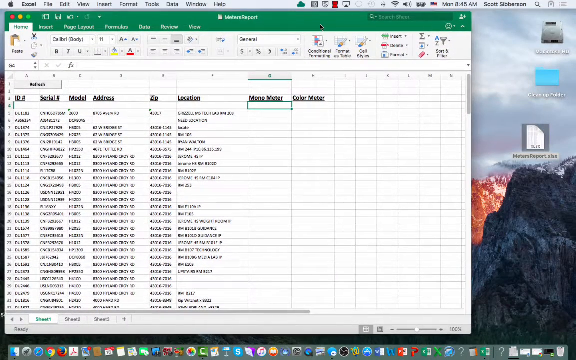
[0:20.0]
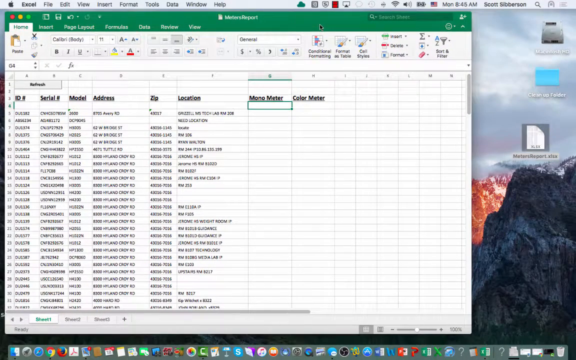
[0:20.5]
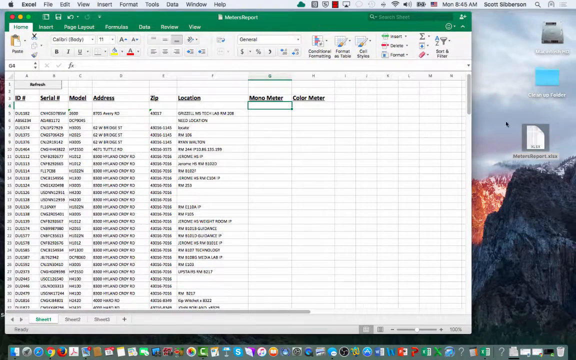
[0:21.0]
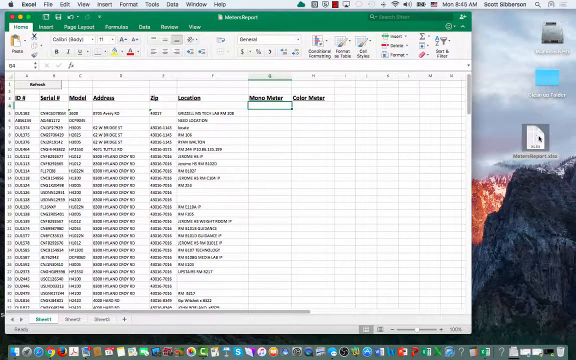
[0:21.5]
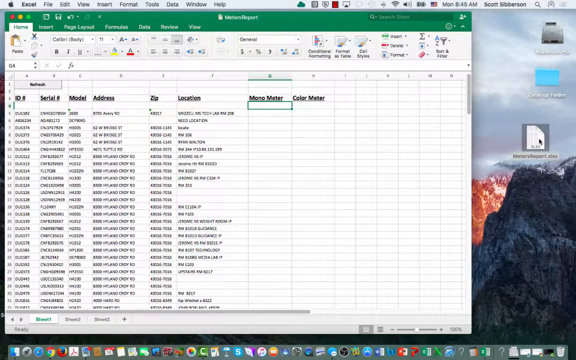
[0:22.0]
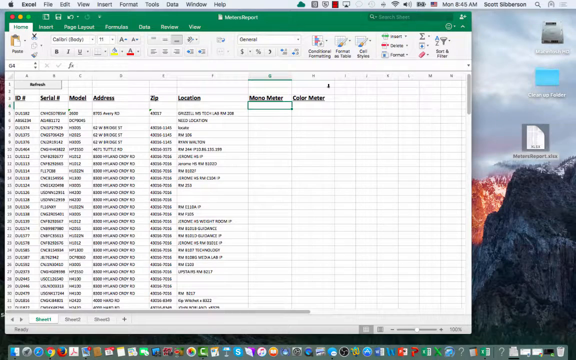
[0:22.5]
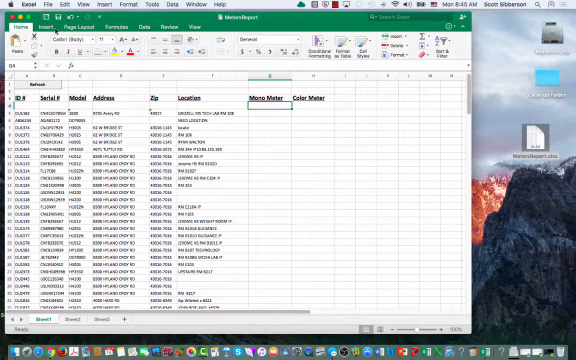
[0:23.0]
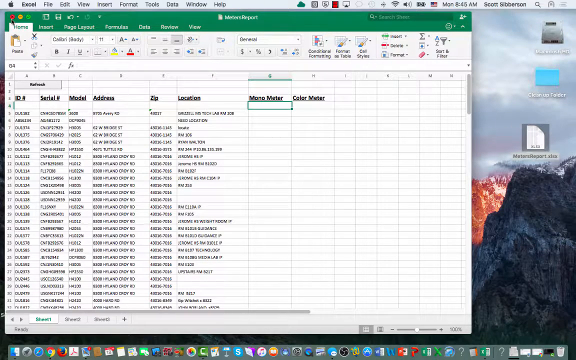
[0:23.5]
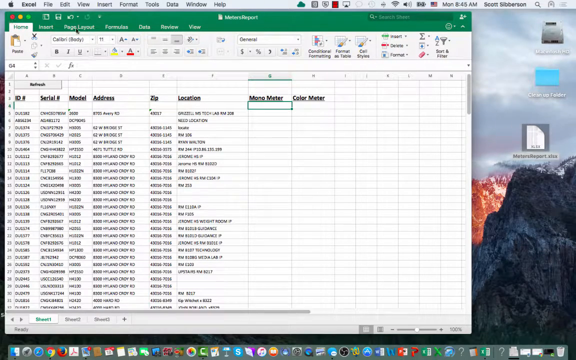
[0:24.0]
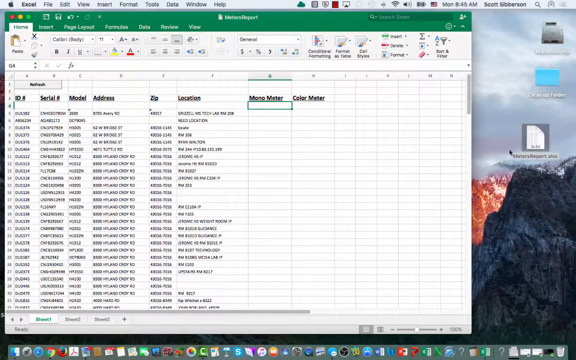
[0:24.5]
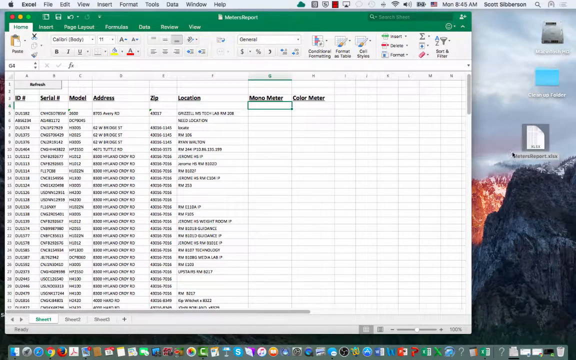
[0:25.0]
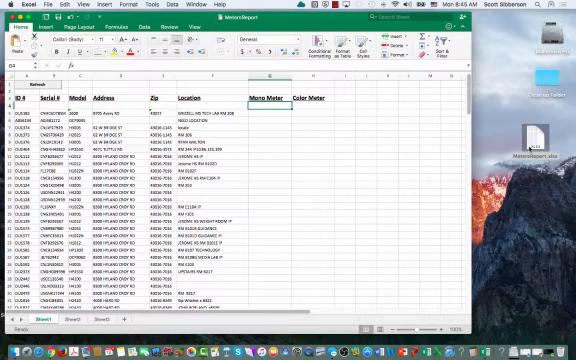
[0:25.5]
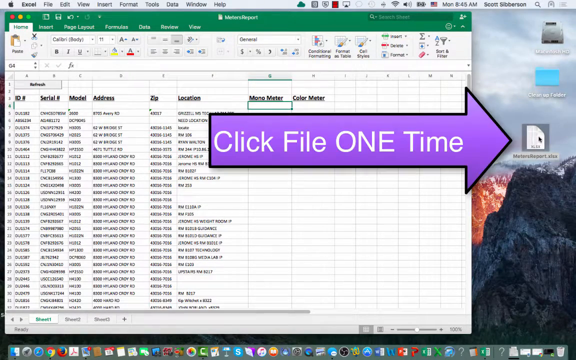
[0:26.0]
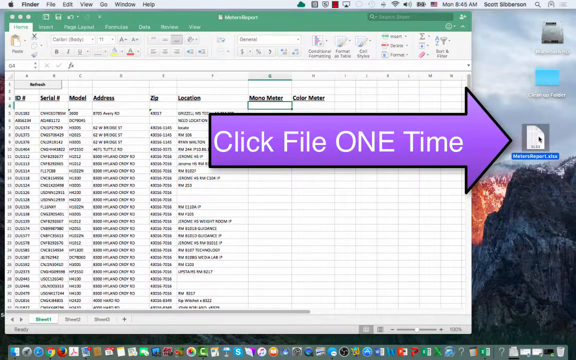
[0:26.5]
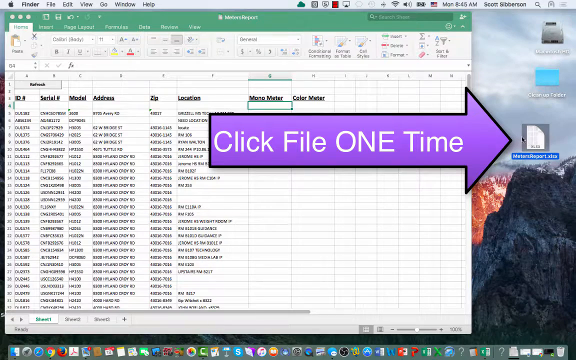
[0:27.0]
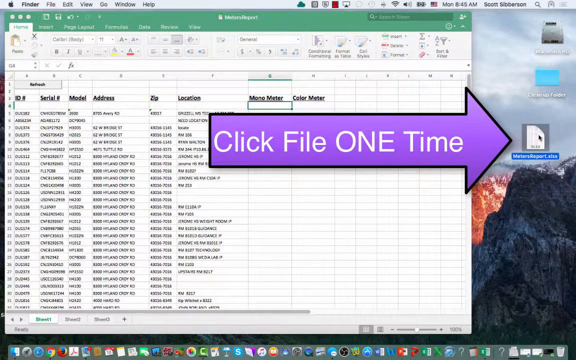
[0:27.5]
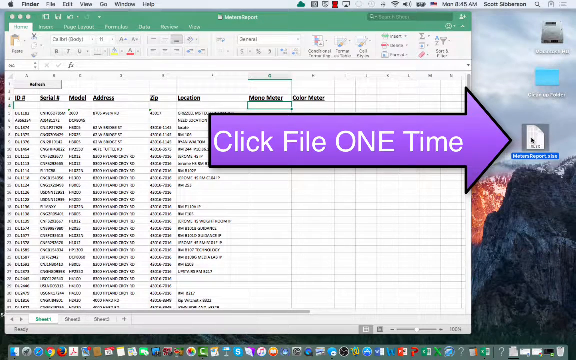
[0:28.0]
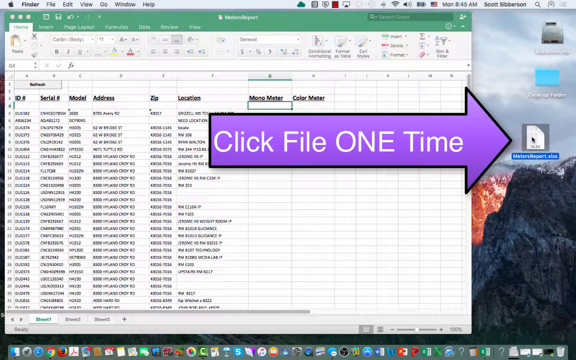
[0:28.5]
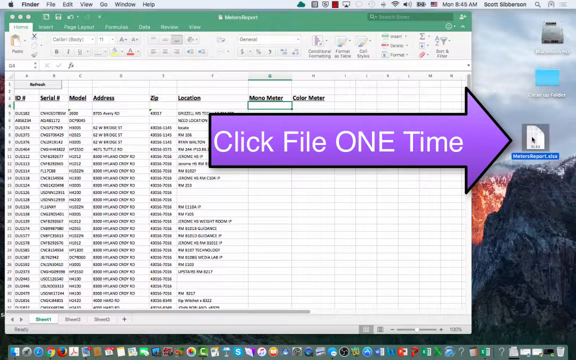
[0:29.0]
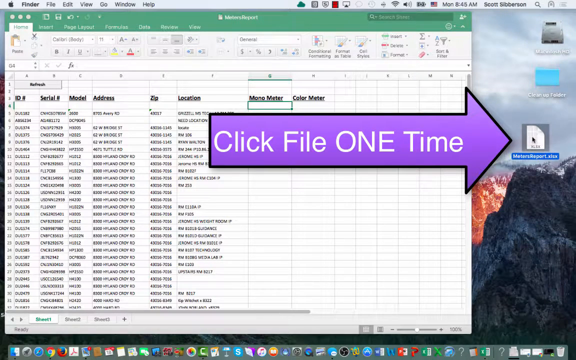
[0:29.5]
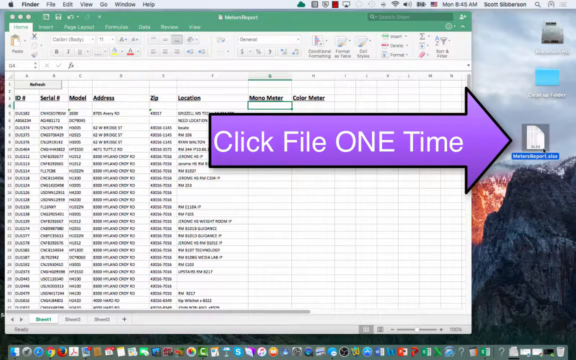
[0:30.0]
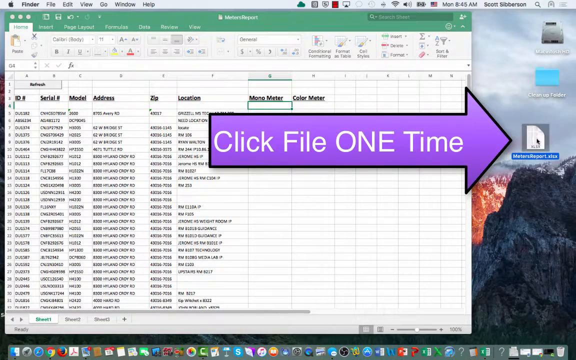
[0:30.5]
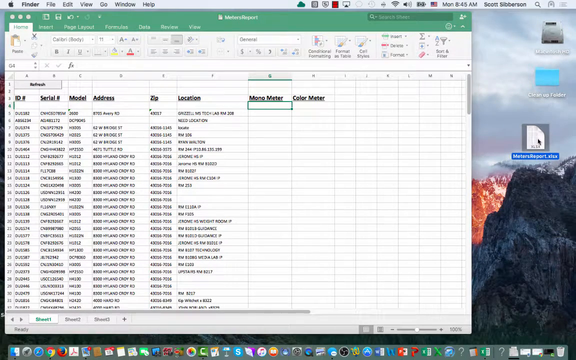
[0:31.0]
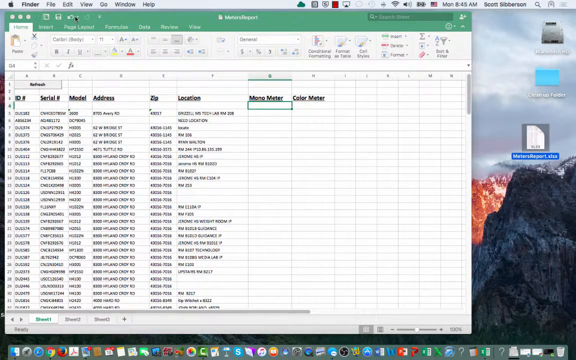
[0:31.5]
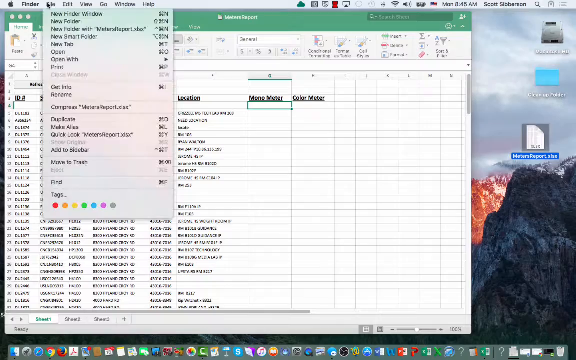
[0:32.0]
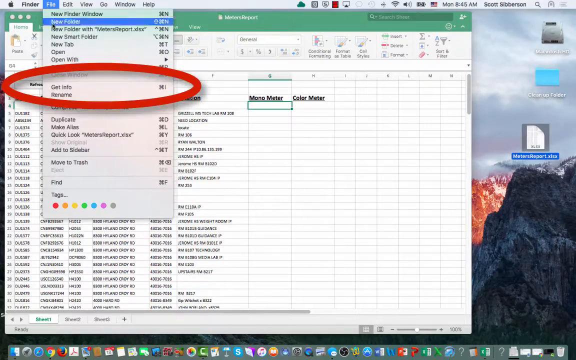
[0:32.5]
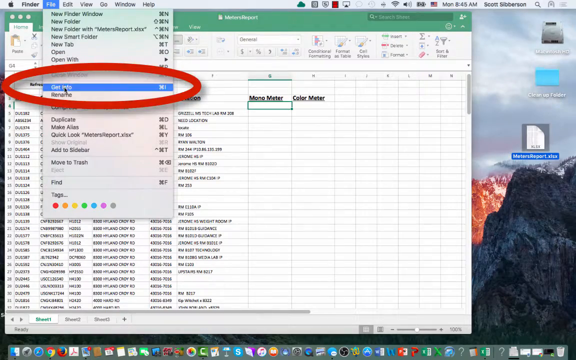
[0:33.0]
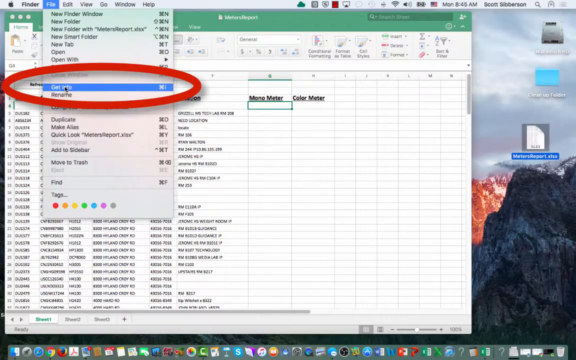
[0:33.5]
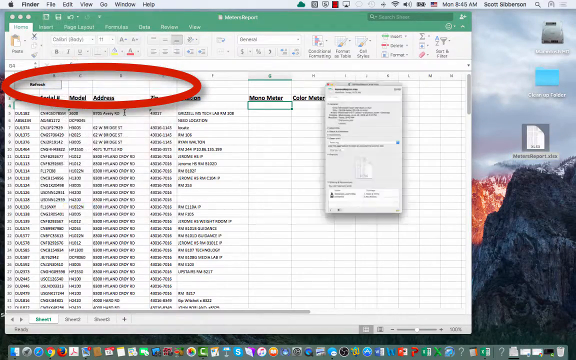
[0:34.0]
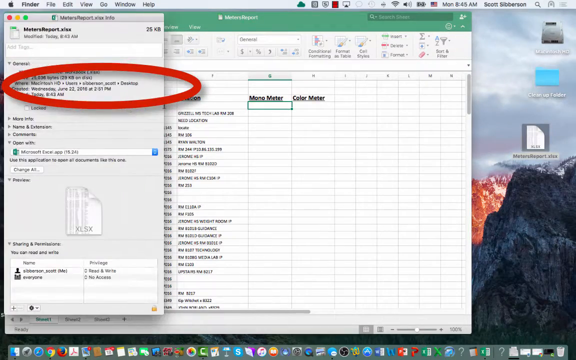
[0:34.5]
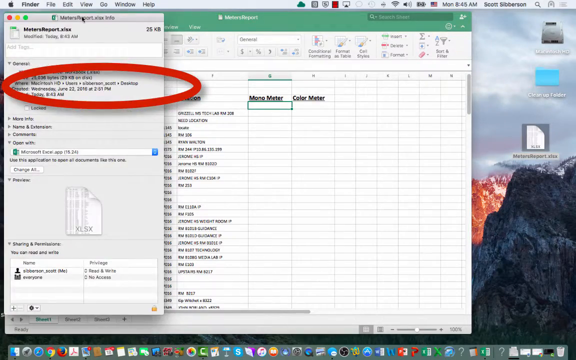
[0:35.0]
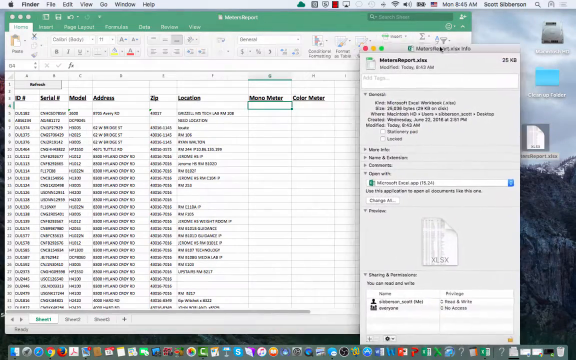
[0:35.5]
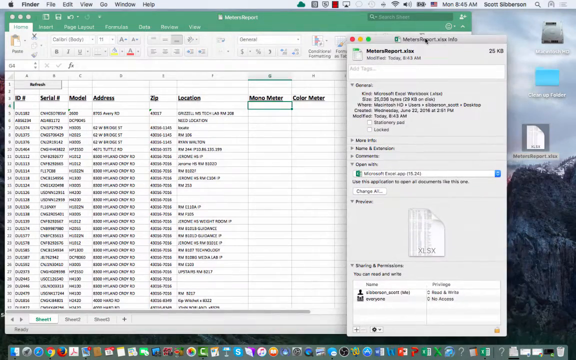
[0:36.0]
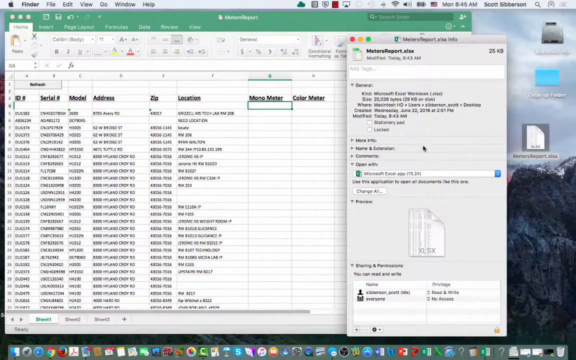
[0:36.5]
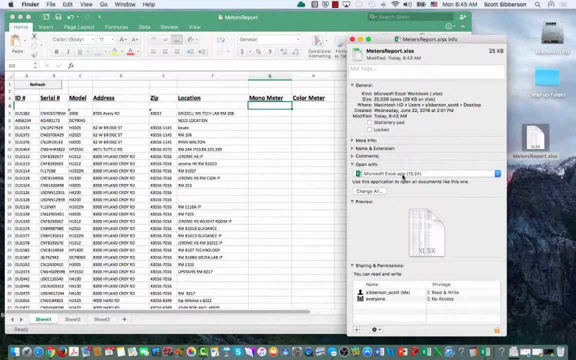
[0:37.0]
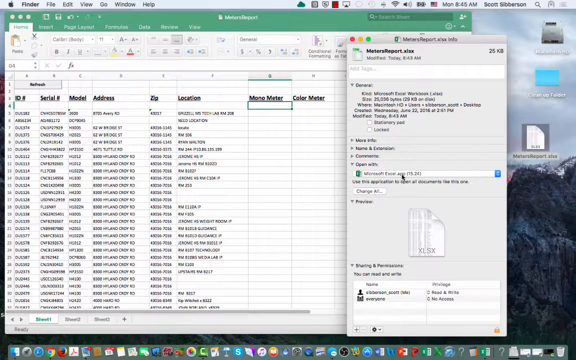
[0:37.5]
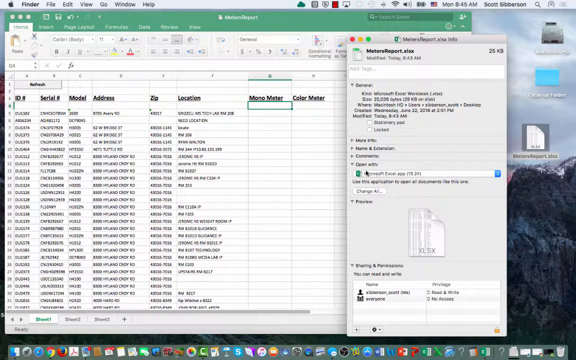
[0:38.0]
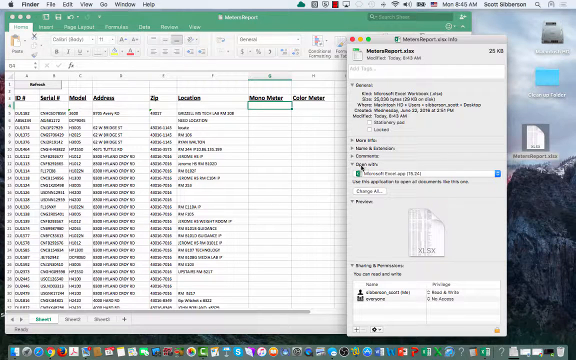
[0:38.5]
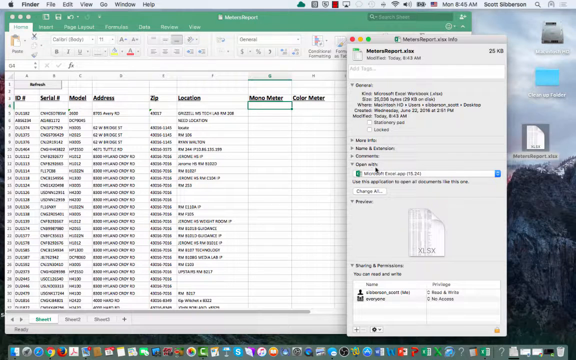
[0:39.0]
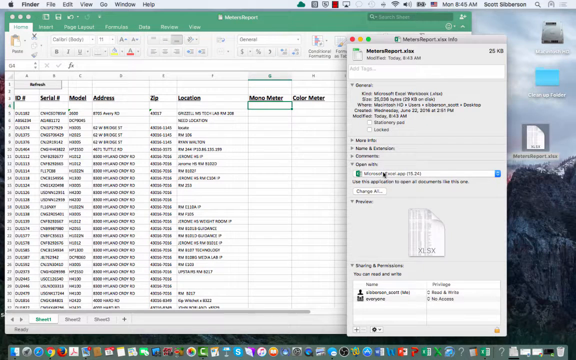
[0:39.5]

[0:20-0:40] Only rows 1 through 32 of the document are visible. The cursor moves to the red button at the top of the document, which appears to be the way to exit. The person then goes back and highlights the Excel document on the desktop, and a large purple instructional arrow appears pointing to it with the text "click file one time". The cursor moves around to show the file. At the top of the desktop, next to the Apple icon, the menu bar reads "finder, file, edit, view, go, window, help". The person opens the "file" menu, and in the drop-down, a little above the middle, a large red circle appears around "get info". They click it, and a window titled "meter's report info" opens with several options. Toward the middle is an option labeled "open with", set to "Microsoft Excel app", and the person sort of moves the cursor to indicate where it should be clicked.